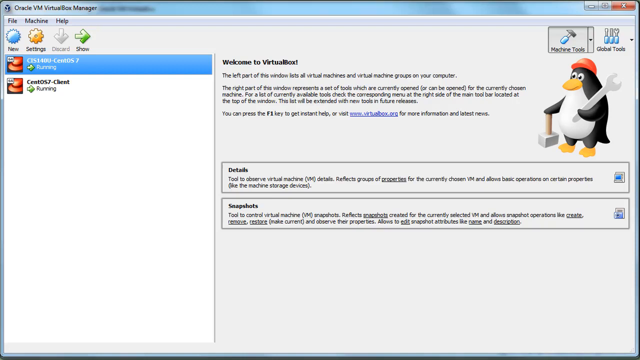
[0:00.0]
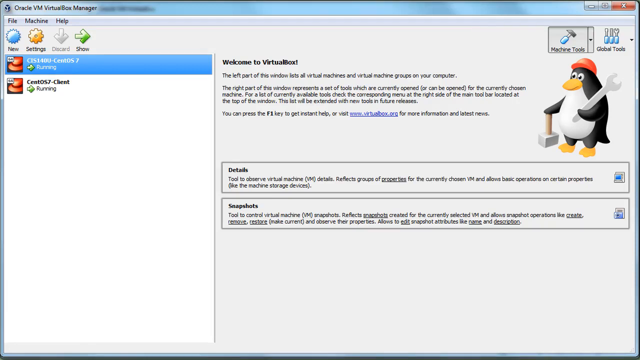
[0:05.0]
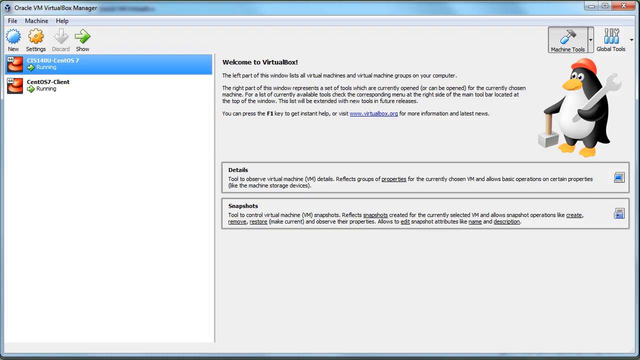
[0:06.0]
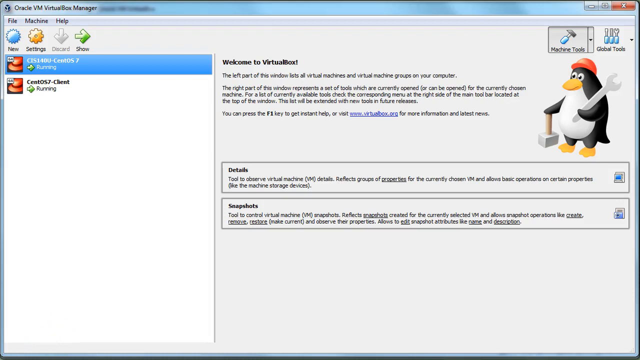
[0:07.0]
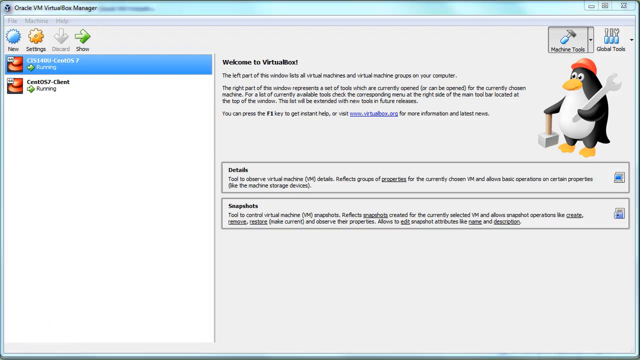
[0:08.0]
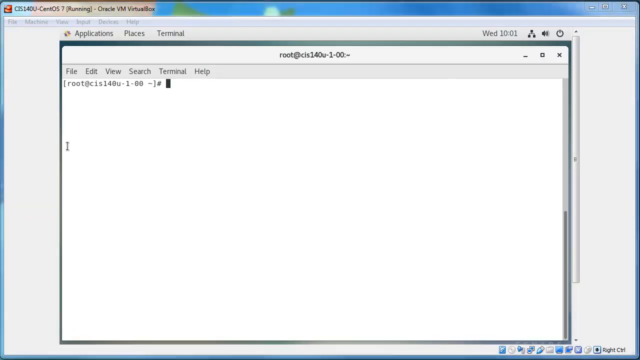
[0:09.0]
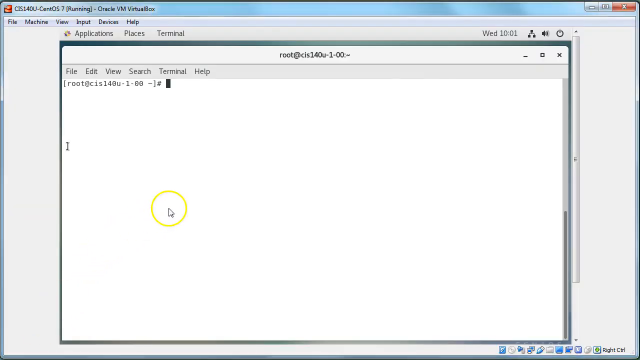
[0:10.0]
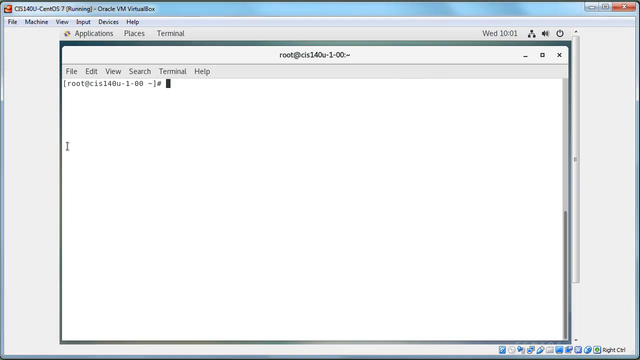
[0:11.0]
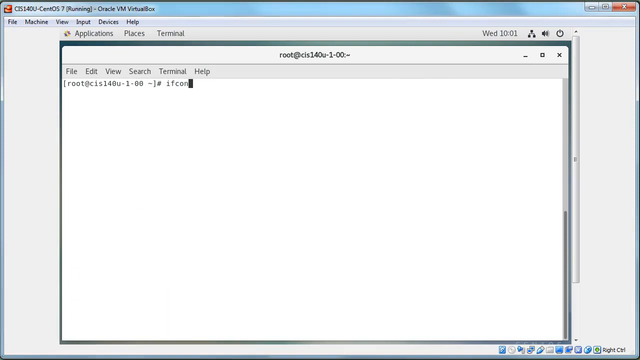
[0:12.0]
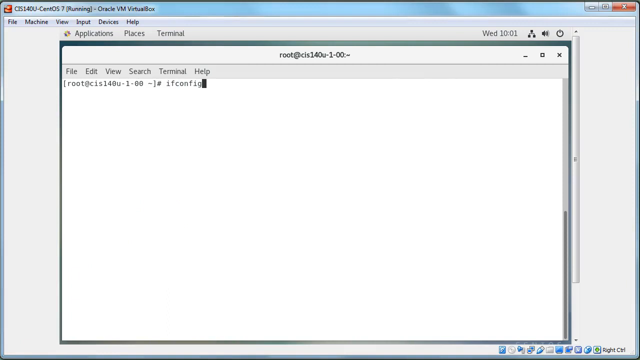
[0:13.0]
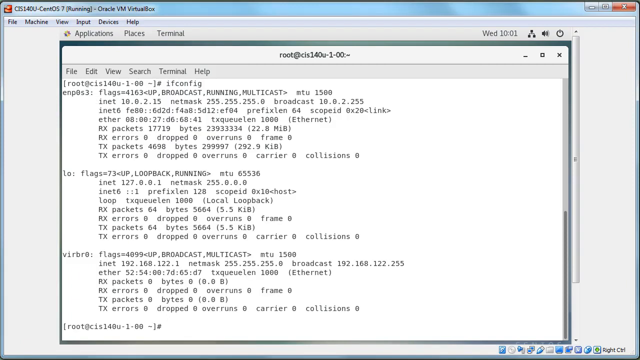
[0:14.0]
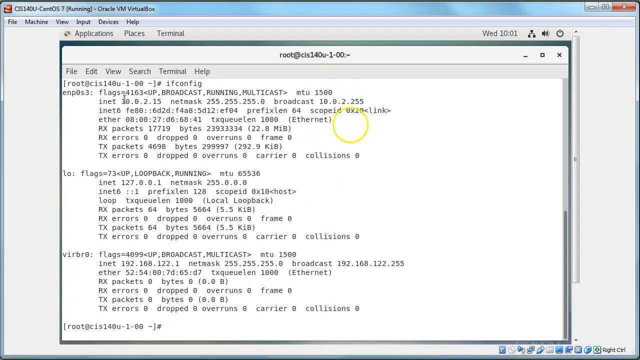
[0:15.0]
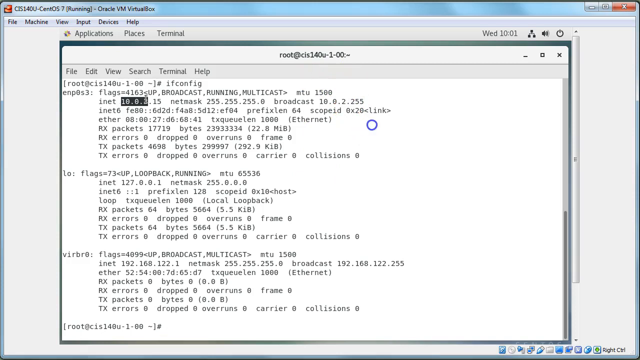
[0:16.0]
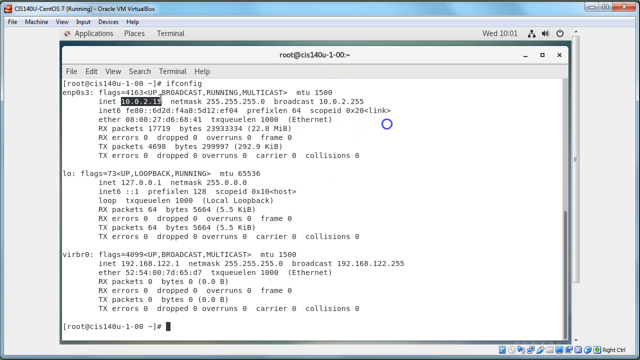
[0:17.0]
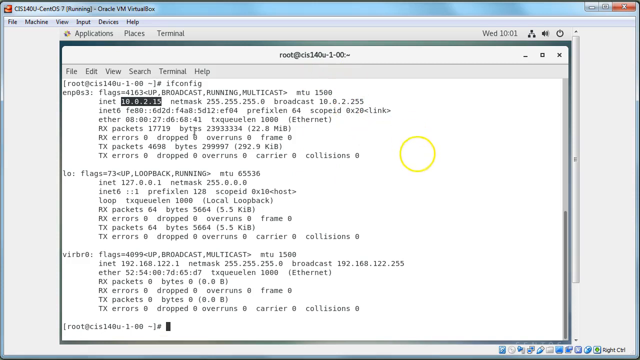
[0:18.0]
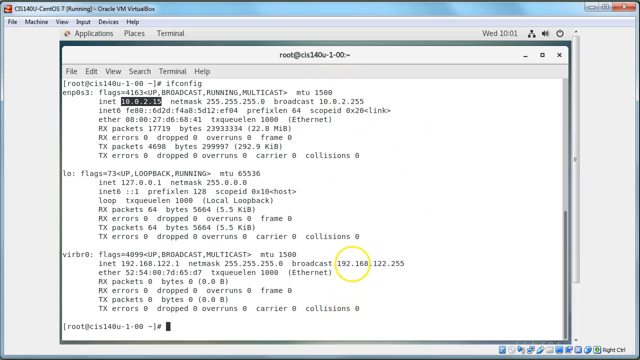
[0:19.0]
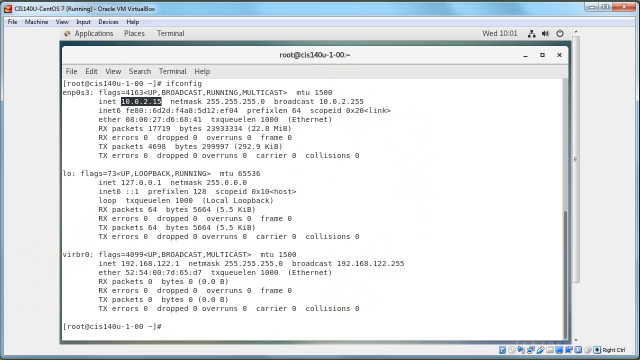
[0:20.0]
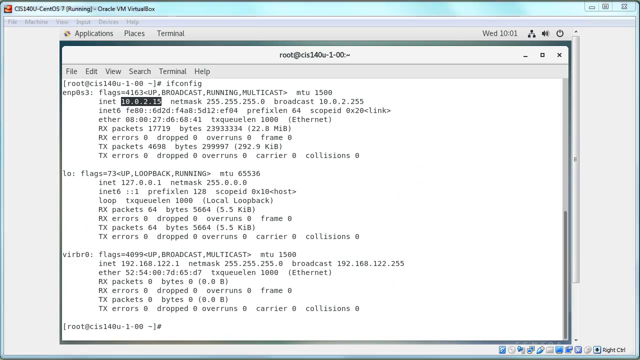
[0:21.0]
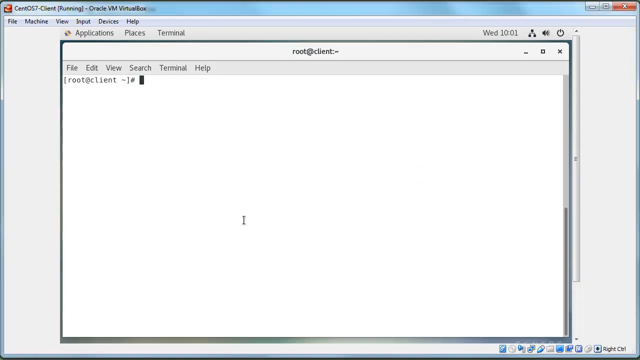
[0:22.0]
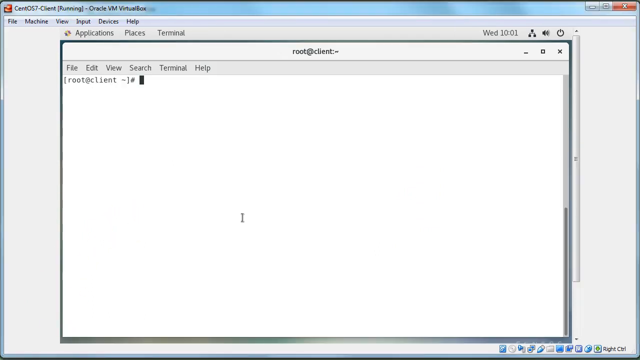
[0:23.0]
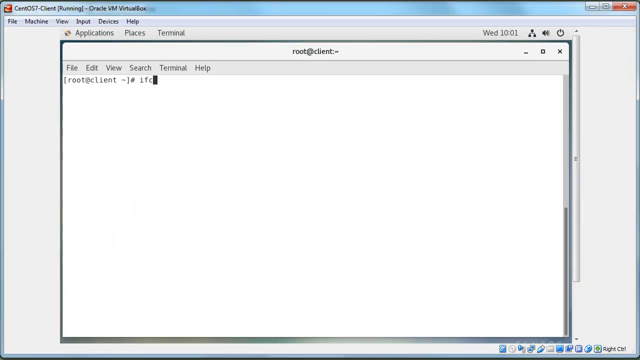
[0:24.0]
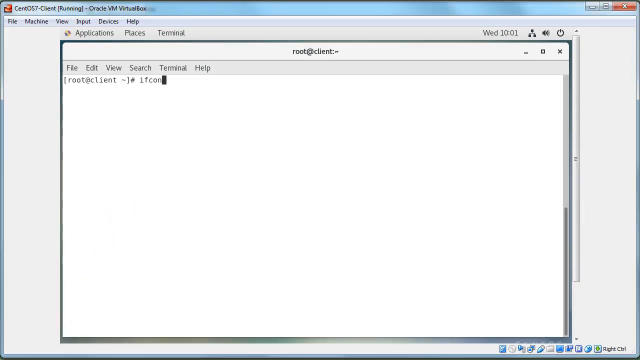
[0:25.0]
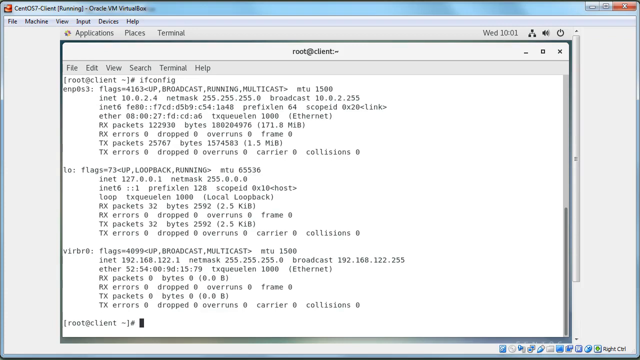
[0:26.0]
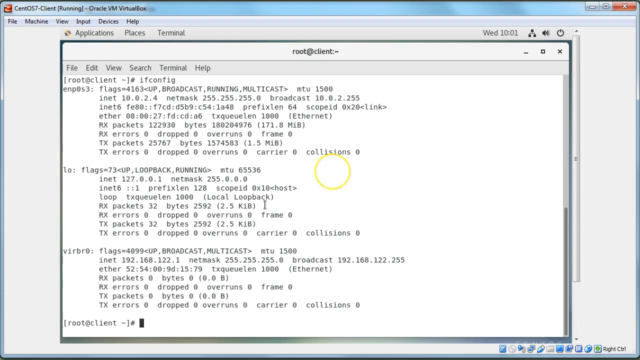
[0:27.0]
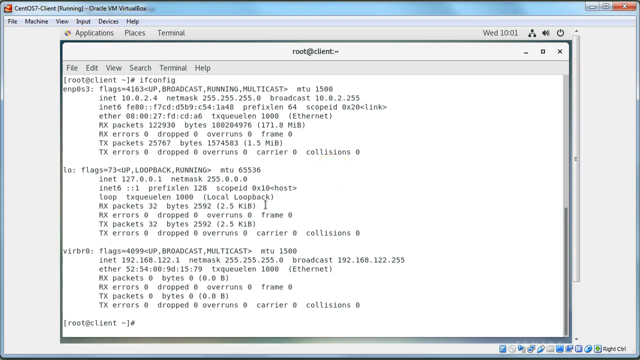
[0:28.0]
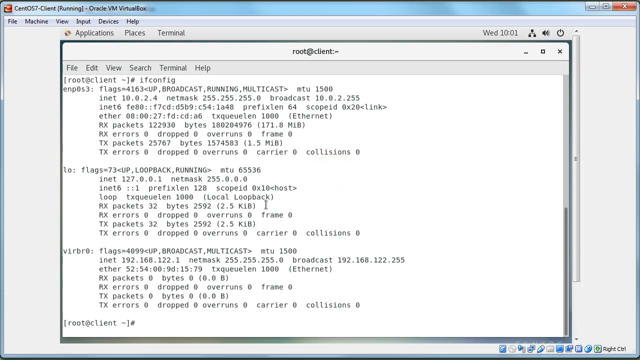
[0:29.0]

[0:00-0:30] The front page of the Oracle VM Virtual Box Manager is on screen, showing the Welcome to Virtual Box menu on the right with a brief introduction to Virtual Box, and a Details and Snapshots panel underneath it, with the penguin logo holding a hammer and wedge at the right. On the left is a panel listing the VMs, of which there are currently two. The screen then transitions to one of the managers, showing an empty terminal. Everything is on a white background. In the terminal he types ifconfig, and a large amount of information appears showing the different flags of the machine, covering the entire terminal. His mouse hovers around the screen, with a yellow circle around wherever the mouse is. The screen then transitions back to the empty terminal, and he types ifconfig again, bringing up the same output showing the different flags.